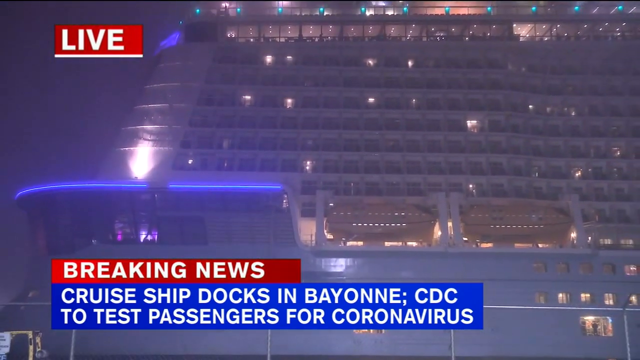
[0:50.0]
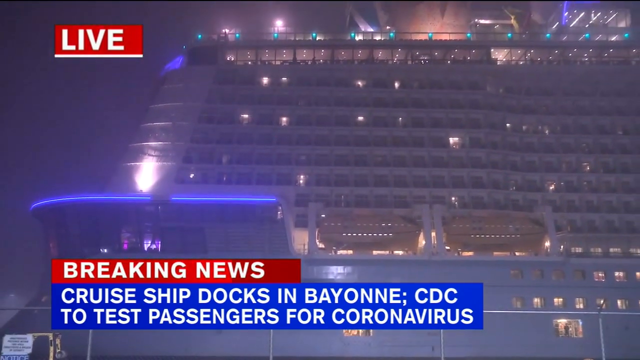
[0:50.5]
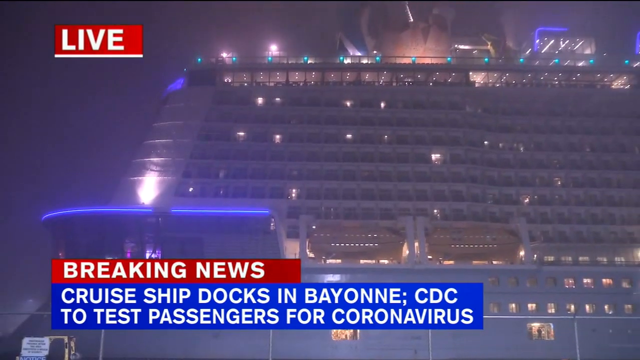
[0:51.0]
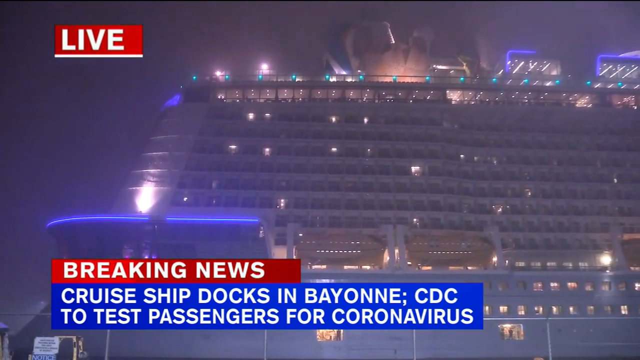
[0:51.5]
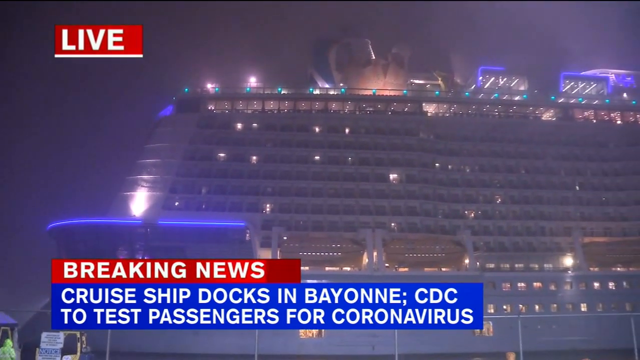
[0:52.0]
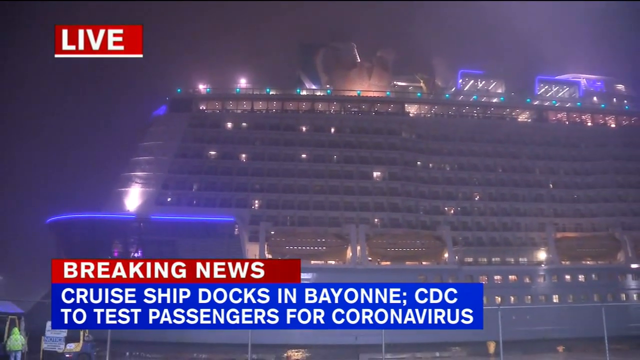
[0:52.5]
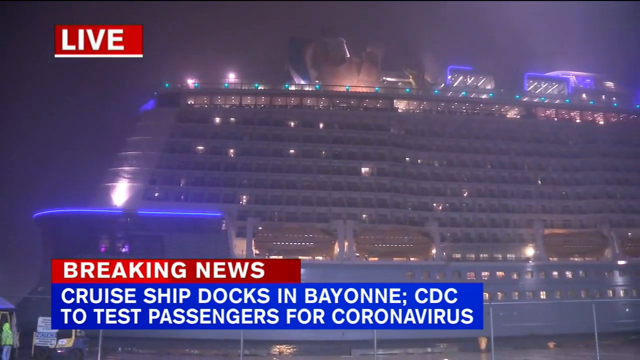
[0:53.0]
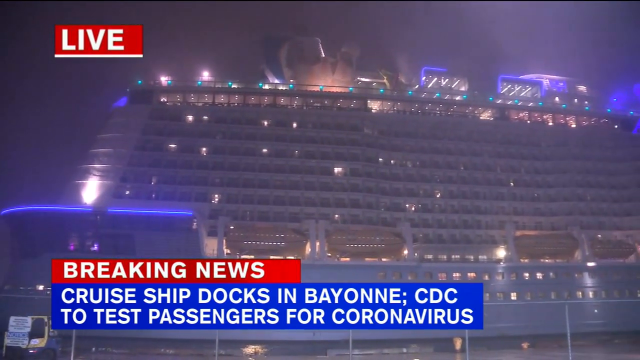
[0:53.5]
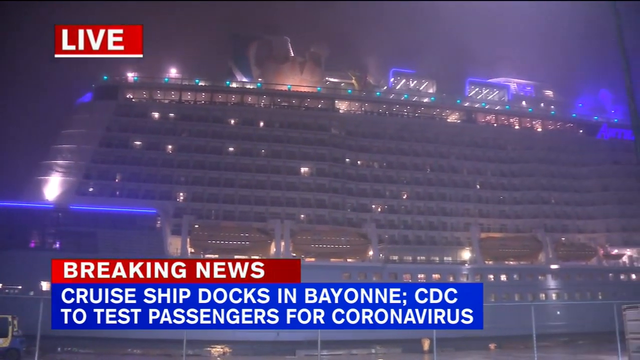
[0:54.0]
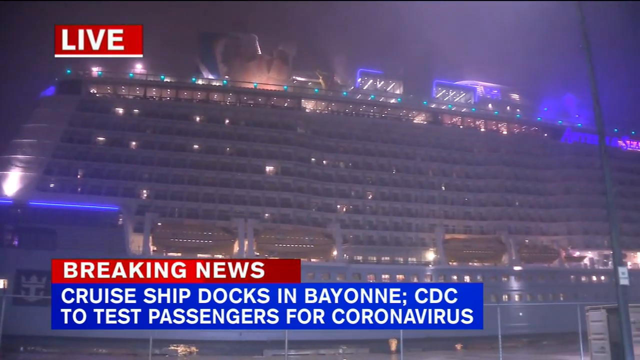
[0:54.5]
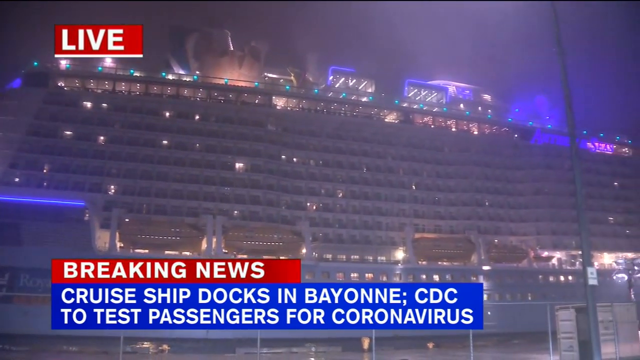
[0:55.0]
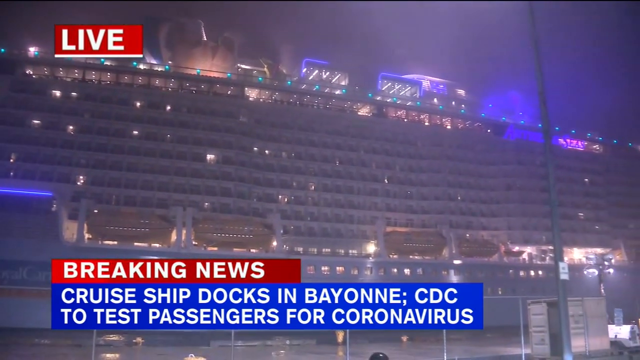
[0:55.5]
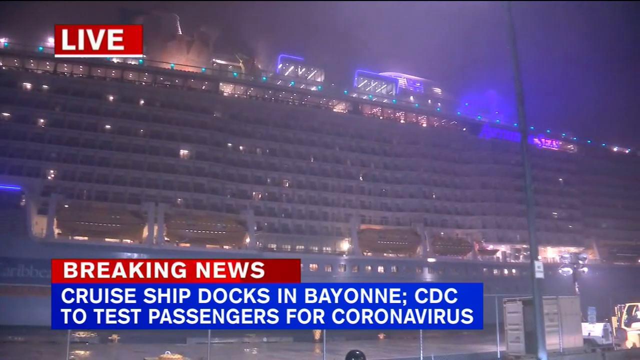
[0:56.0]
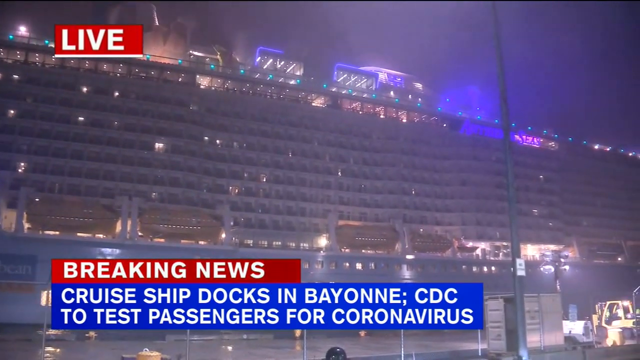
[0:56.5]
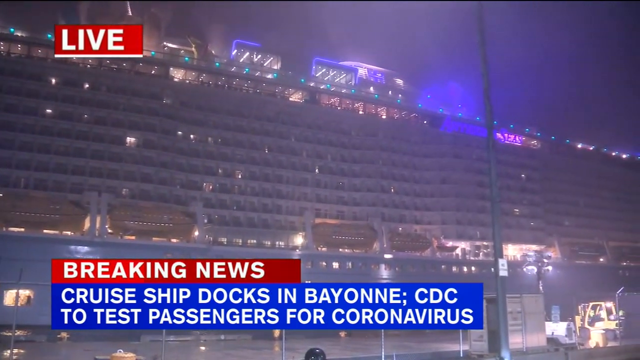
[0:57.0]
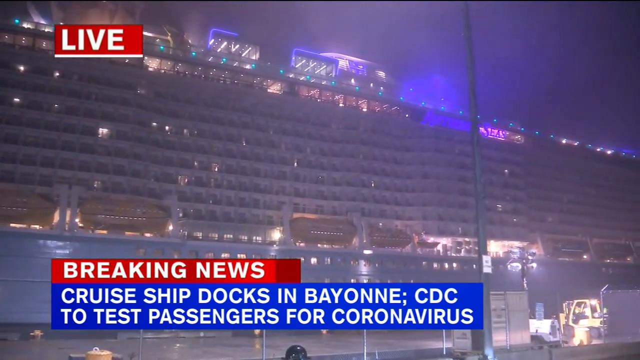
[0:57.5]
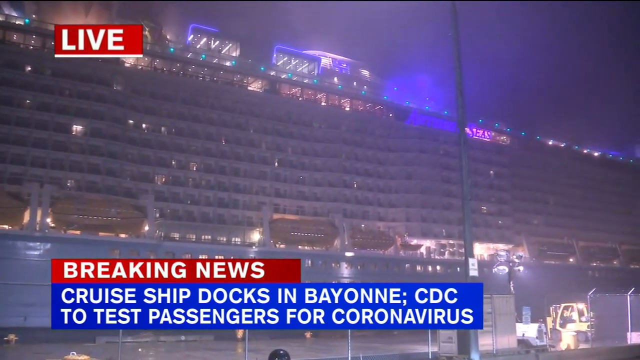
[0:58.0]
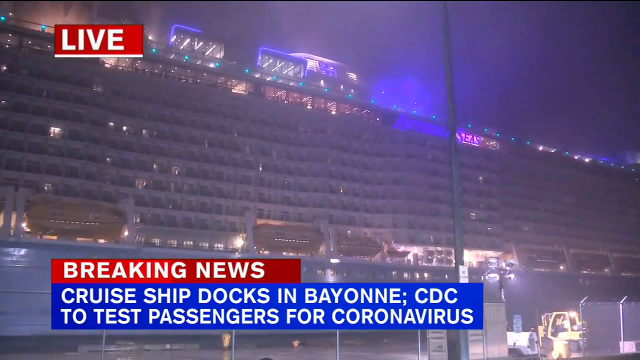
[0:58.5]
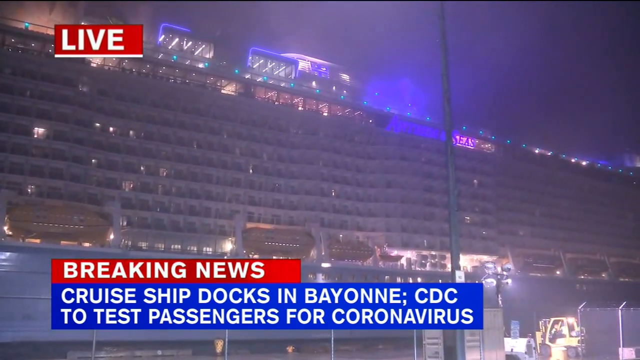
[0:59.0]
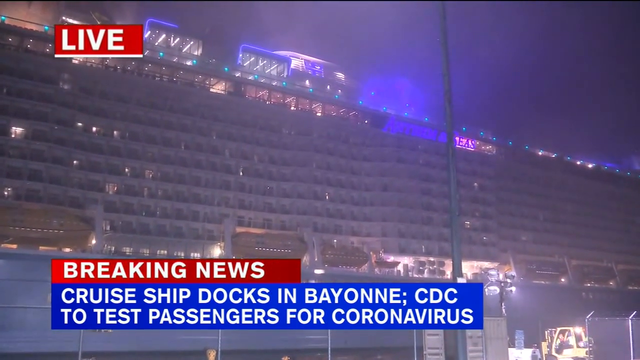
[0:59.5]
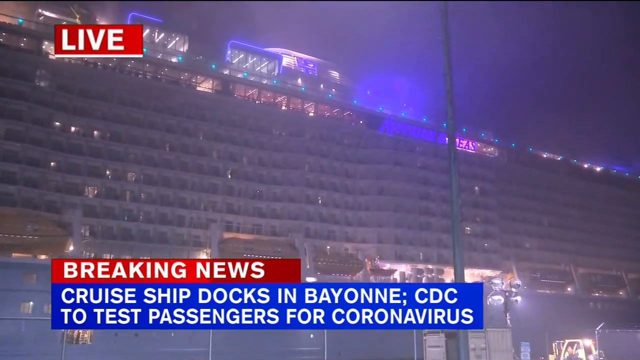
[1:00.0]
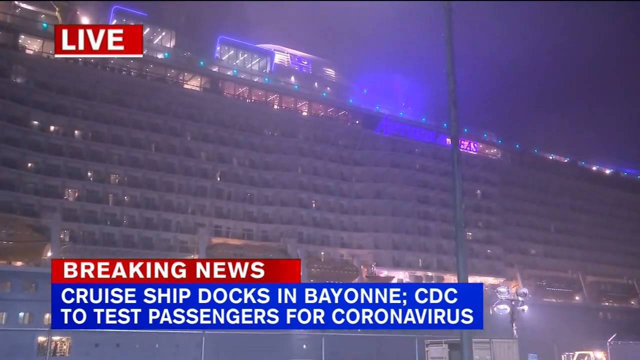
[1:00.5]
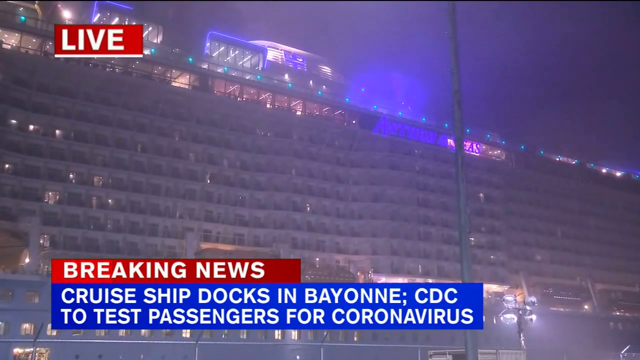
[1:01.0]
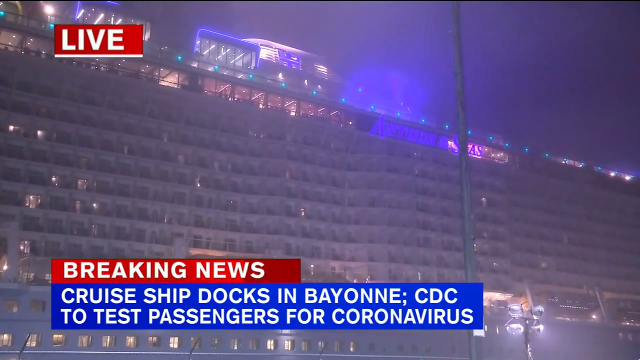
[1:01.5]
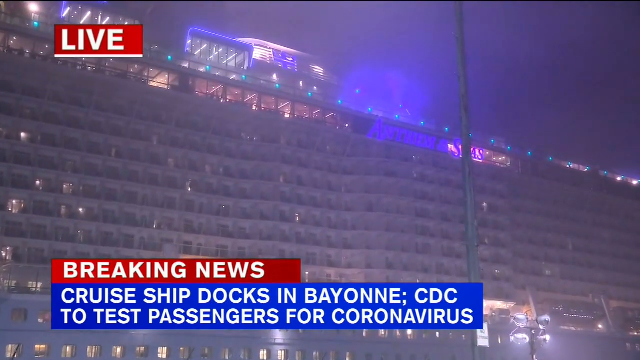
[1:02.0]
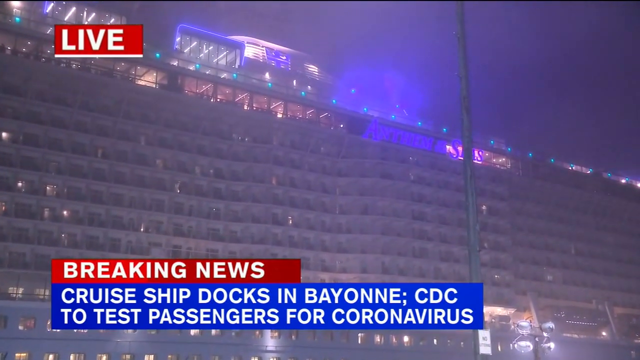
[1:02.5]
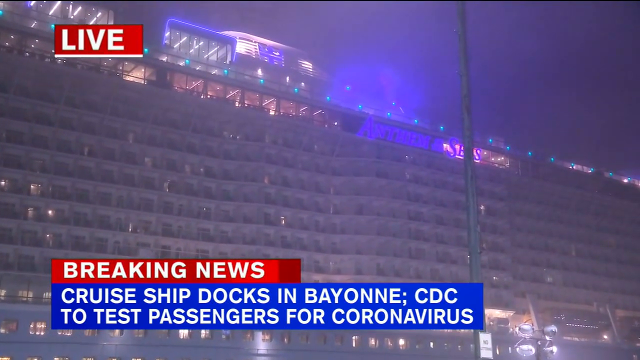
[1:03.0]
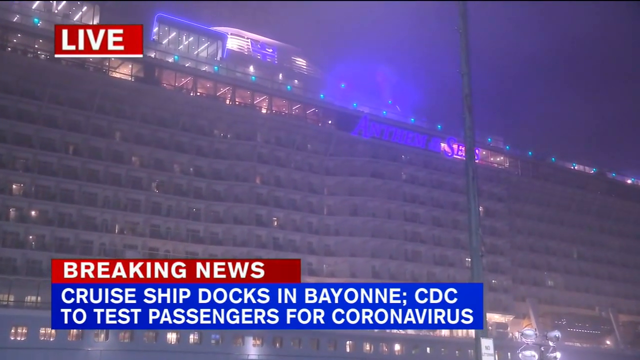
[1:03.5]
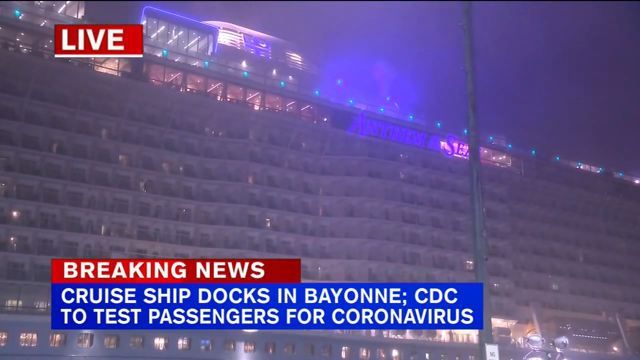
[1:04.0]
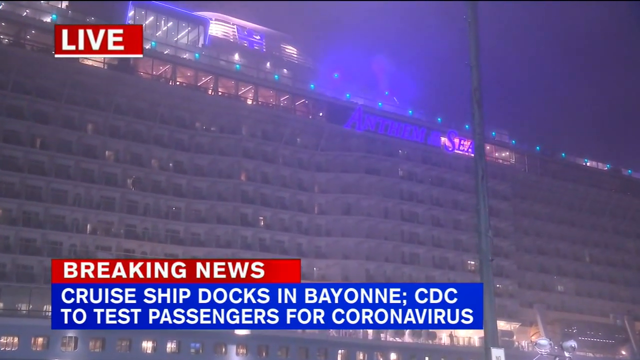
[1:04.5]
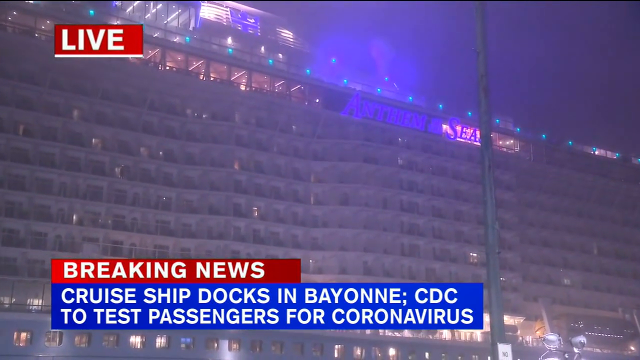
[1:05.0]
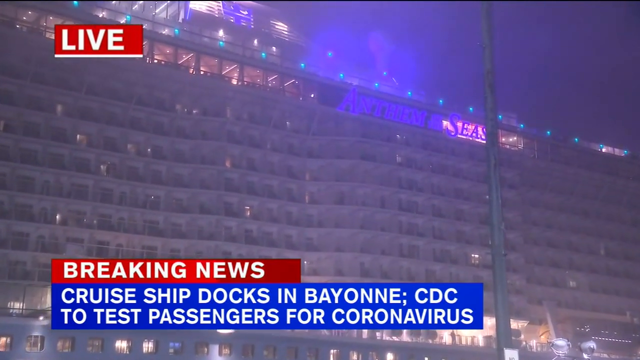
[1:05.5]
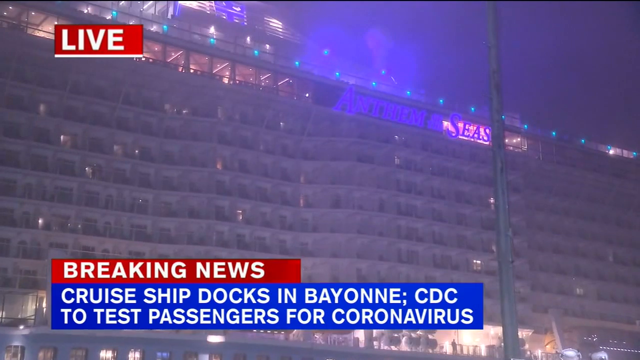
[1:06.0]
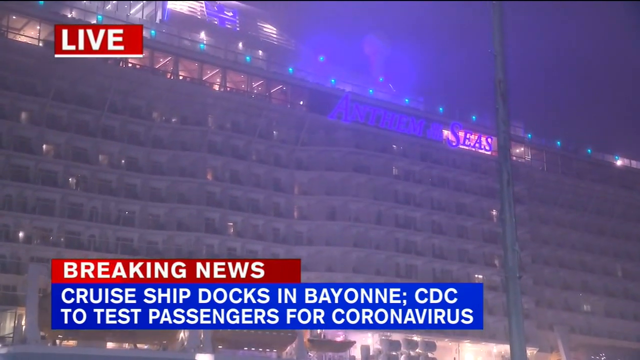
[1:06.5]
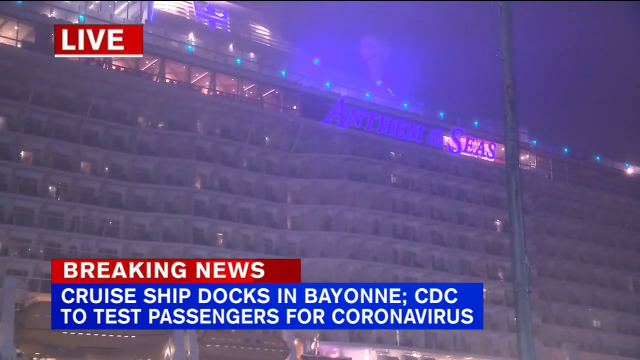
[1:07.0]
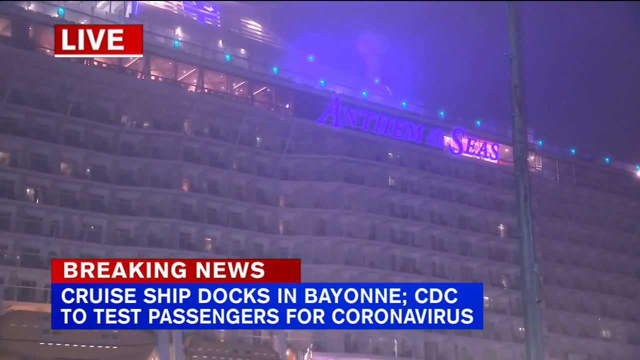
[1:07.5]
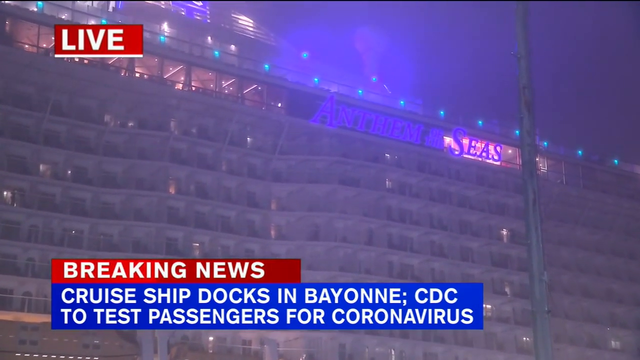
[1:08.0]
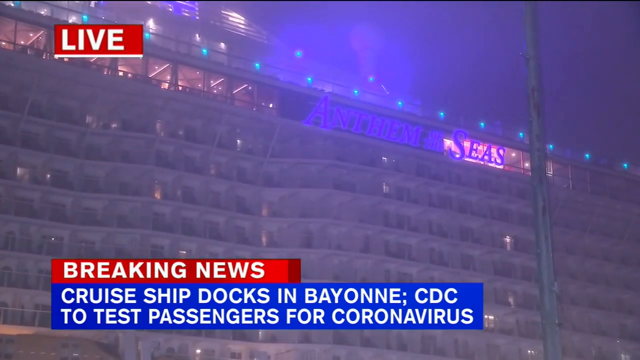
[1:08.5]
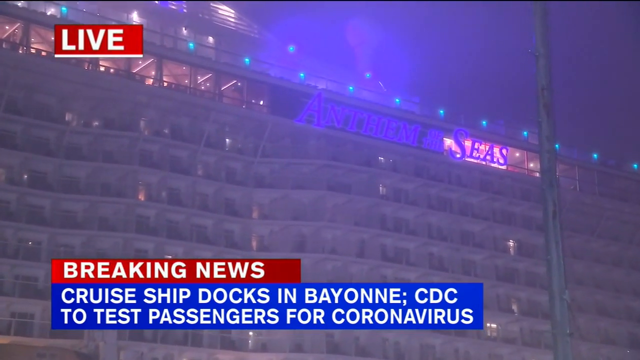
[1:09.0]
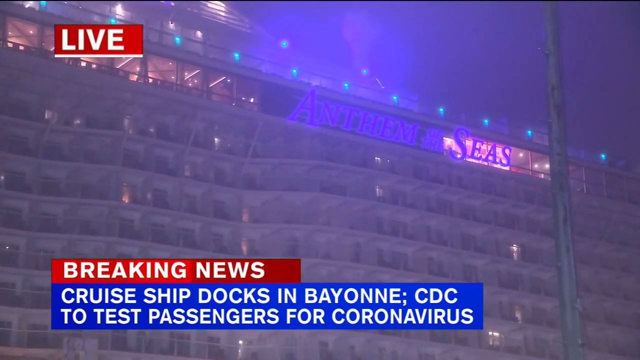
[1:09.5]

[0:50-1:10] A big cruise ship has "Diamond Princess" written on it. A few people are next to a white ambulance with Japanese characters on each side. The people are dressed in what appears to be protective gear; one in a light blue suit and another in a yellow vest are visible, and they seem to be awaiting or directing the ambulance. The day is clear and bright. An on-screen message has "Breaking News" on top with a red background, and below it a message reads "8 Americans on the Japanese cruise ship, we have tested positive for coronavirus." The shot changes from the ship to a close shot of the ambulance. The focus then shifts to a different cruise ship, with "The Anthem of the Seas" written on it, a Royal Caribbean cruise ship. It appears to be night, or at least a very dark, foggy day. The ship is massive with countless lighted windows and multiple decks, and it is bright blue on each side. A male news reporter named Derek appears on screen wearing a tan jacket and holding a microphone with ABC on it. A message on screen says "breaking news, cruise ship docks in Bayonne, CDC to test passengers for coronavirus." It seems to be night.